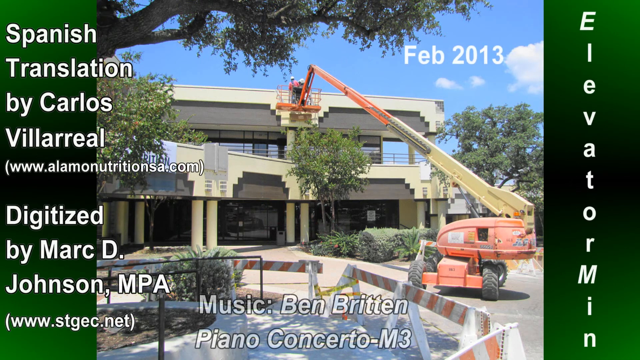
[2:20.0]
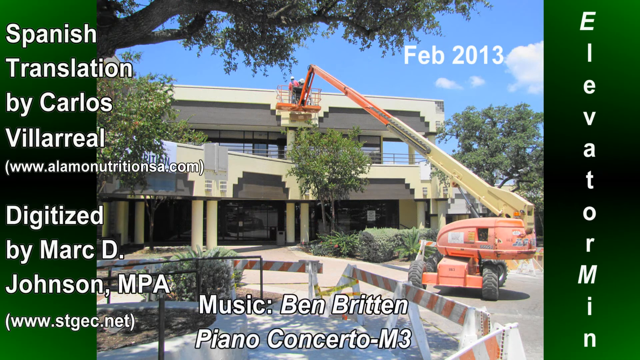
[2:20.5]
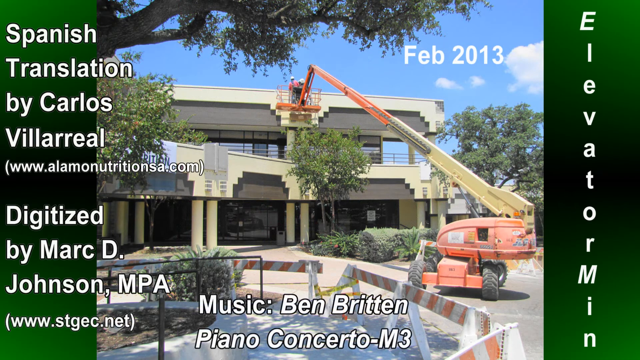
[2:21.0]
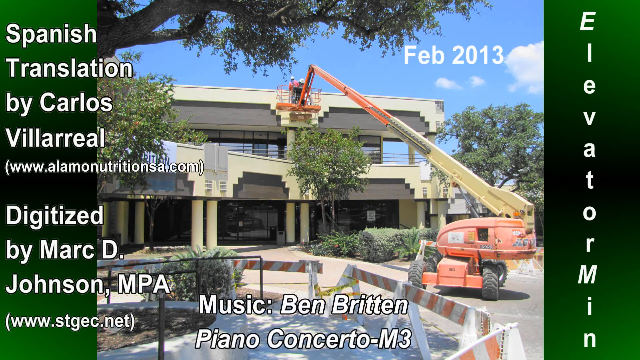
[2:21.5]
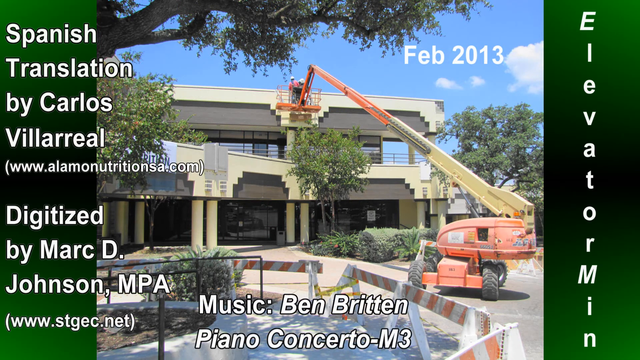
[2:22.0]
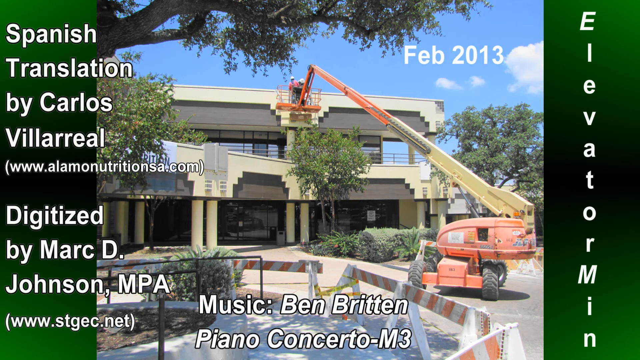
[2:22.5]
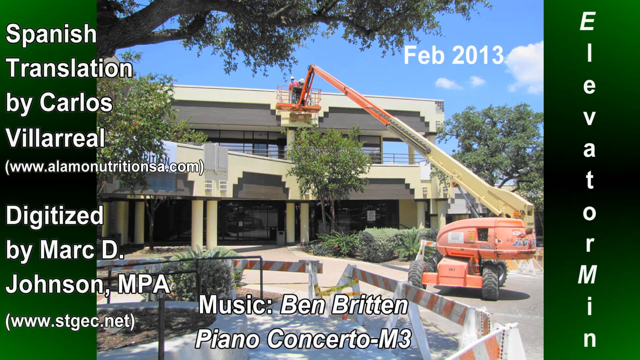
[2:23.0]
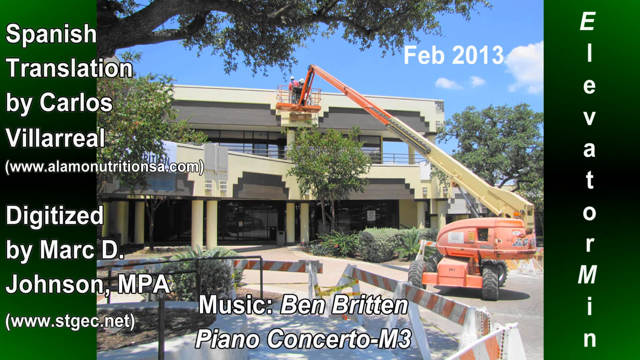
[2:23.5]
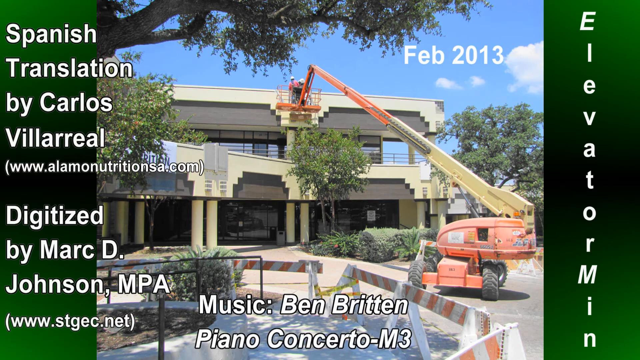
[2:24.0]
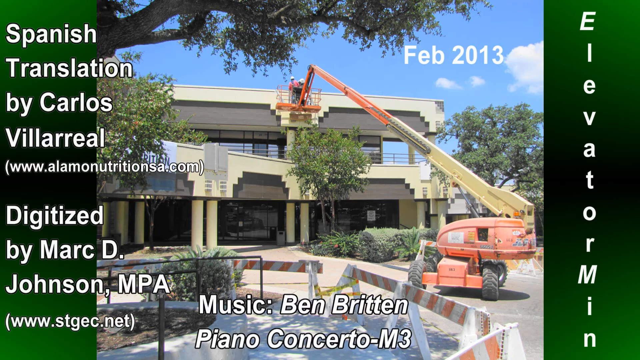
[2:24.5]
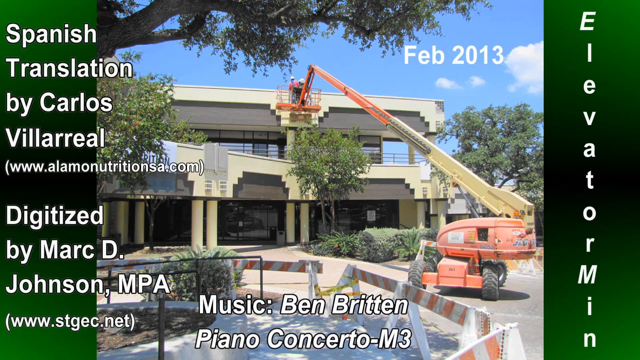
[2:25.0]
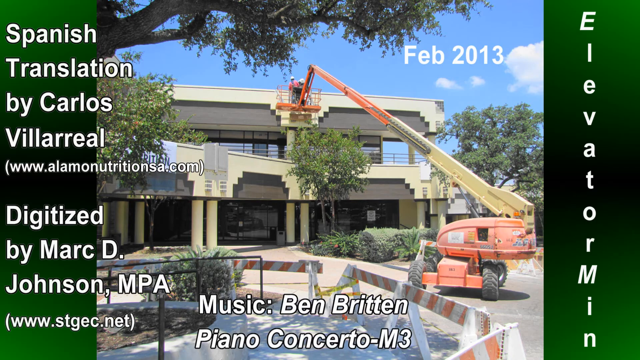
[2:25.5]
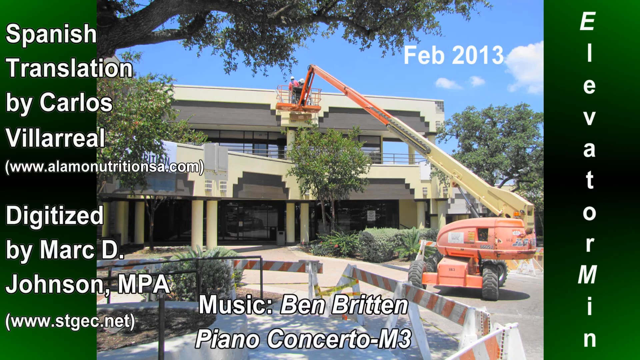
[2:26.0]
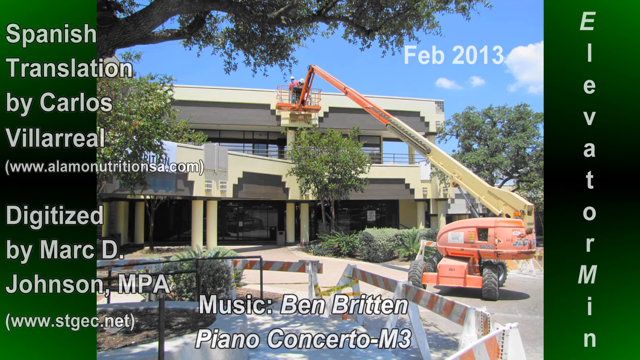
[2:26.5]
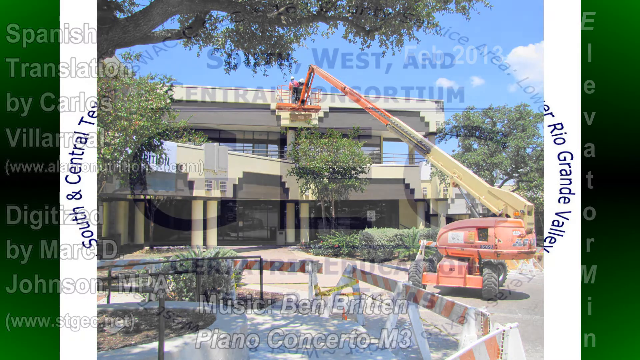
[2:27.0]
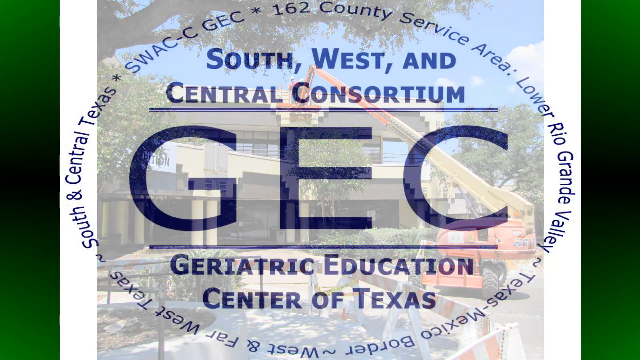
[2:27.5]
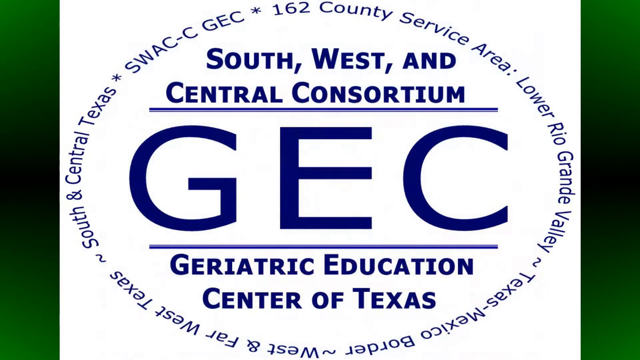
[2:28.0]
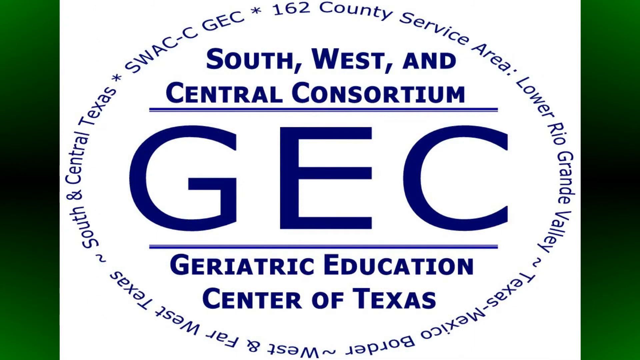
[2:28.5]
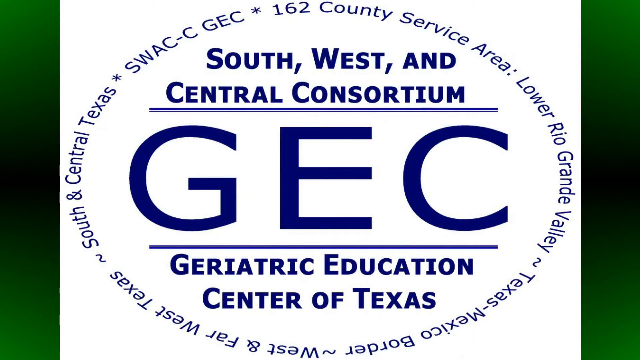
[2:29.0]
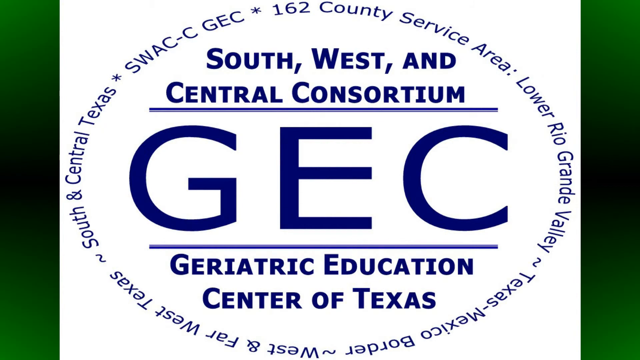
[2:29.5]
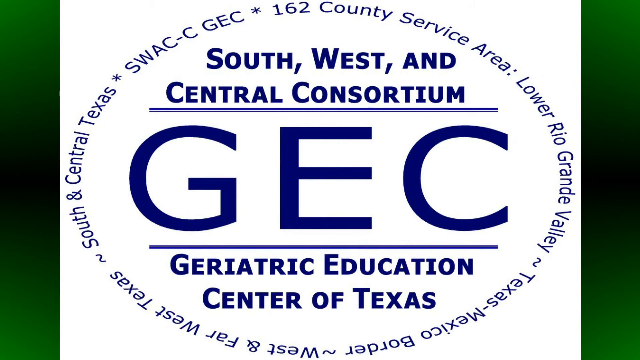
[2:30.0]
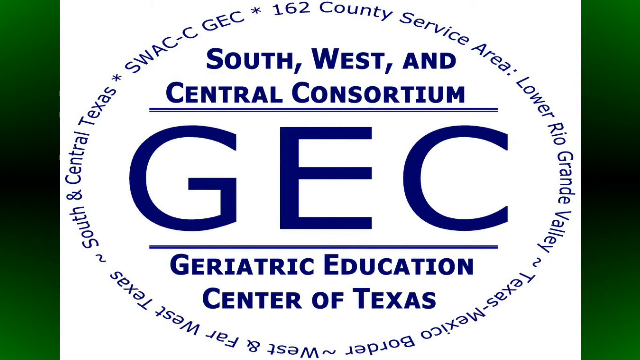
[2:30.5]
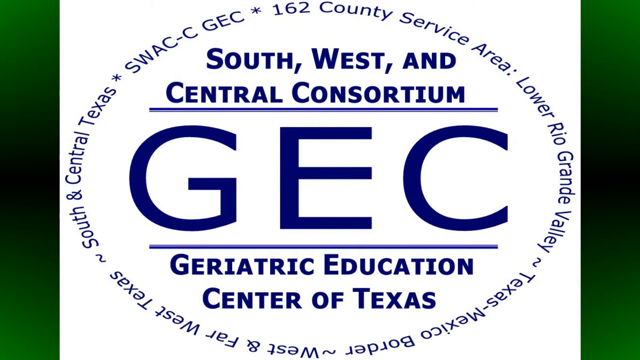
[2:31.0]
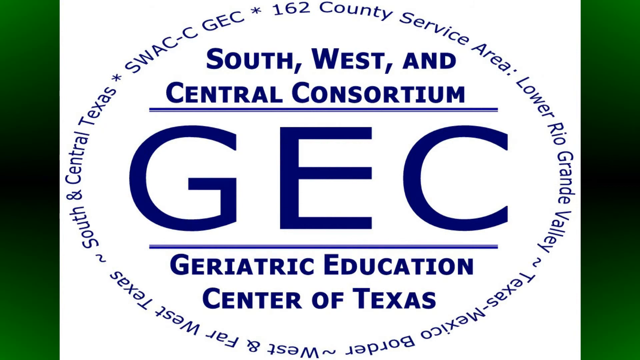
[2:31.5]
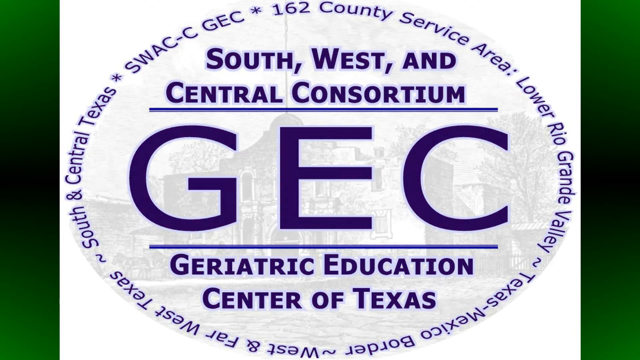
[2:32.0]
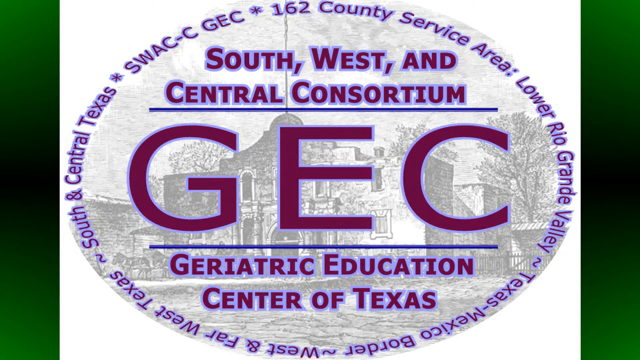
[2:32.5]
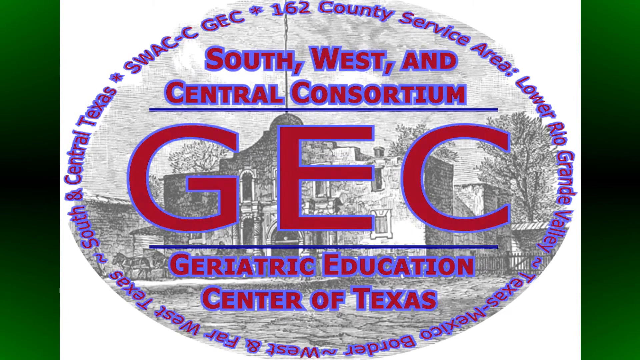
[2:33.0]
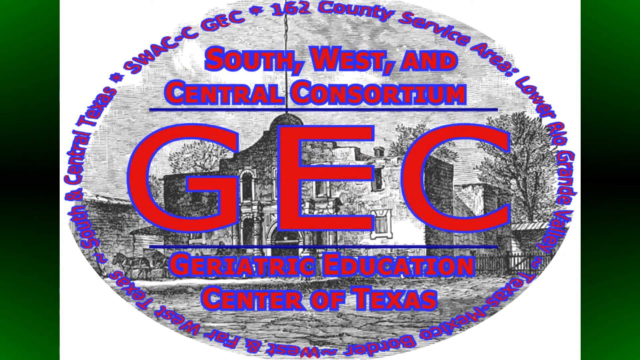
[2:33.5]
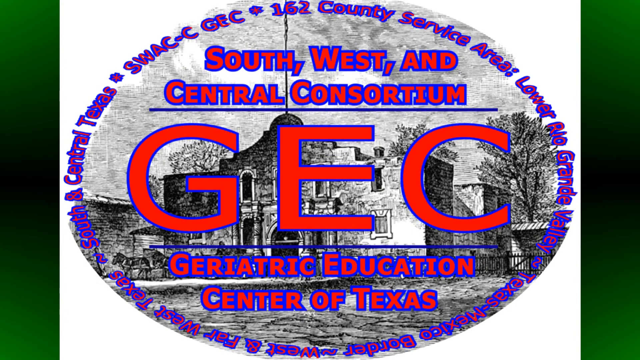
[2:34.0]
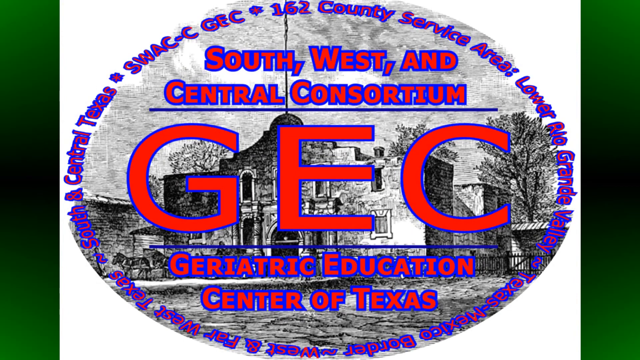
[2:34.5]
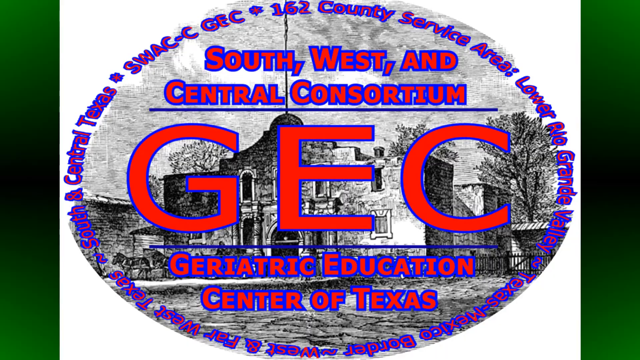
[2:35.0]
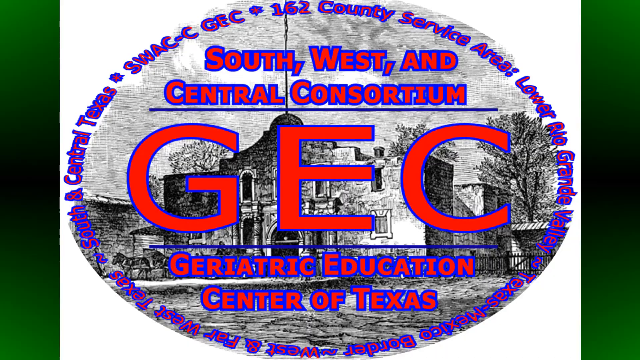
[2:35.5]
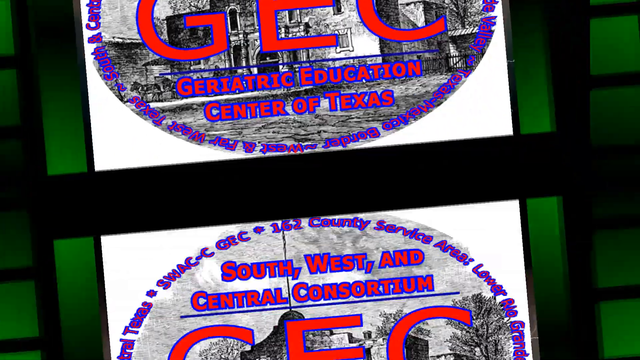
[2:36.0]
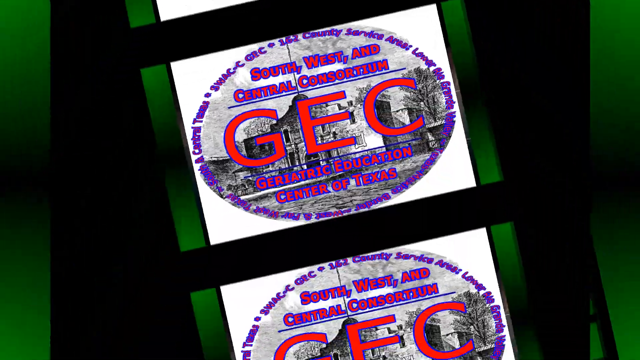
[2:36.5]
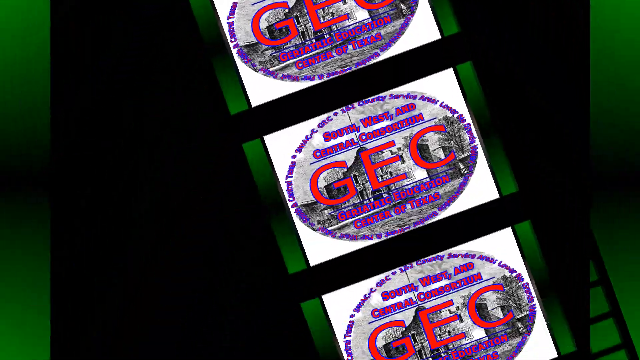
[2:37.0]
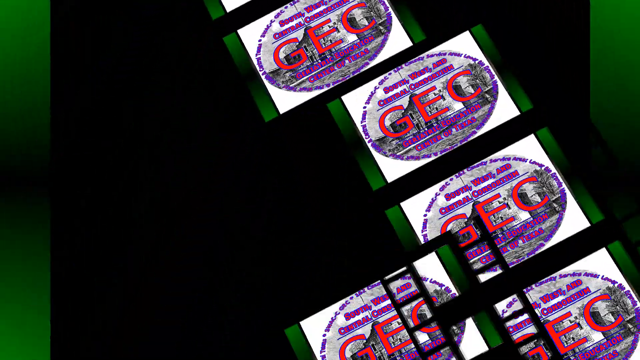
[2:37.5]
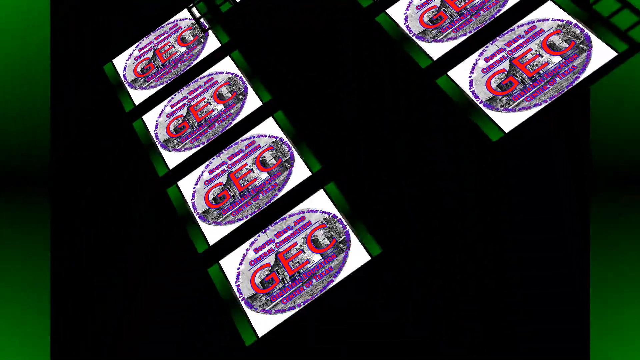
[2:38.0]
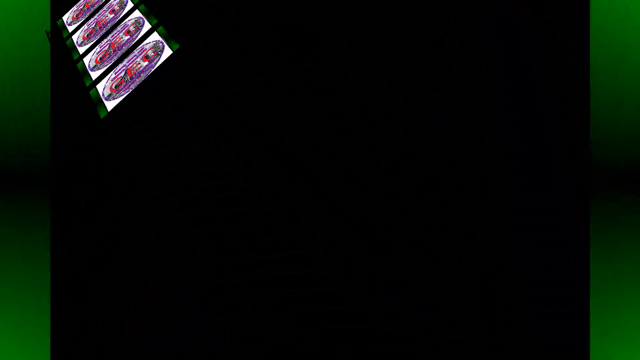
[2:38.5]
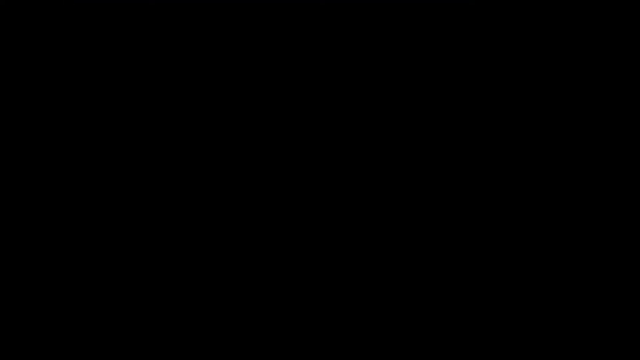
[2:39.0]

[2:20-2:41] Credits show a Spanish translation by Carlos Villarreal, with a link to his site, and that the video was digitized by Mark D Johnson MPA. The music is listed as "piano concerto m3", and the date is February 2013. A picture shows a worker who has brought an orange machine, which has an extending arm so he can stand above the ground. A logo for the Southwest and Central Consortium GEC, Geriatric Education Center of Texas, appears in a blue font on a white background. The logo then turns red with blue frames, and a very old building is shown. Several logos vanish, and several logos appear close to each other like paper.